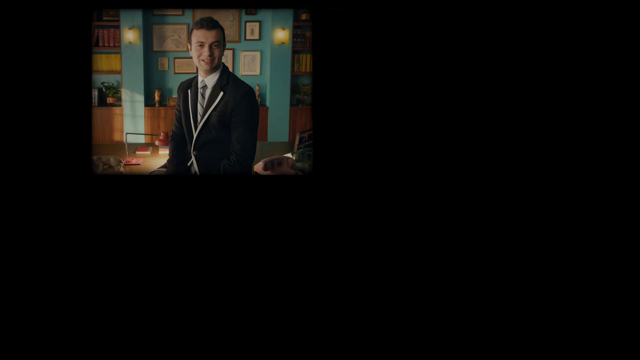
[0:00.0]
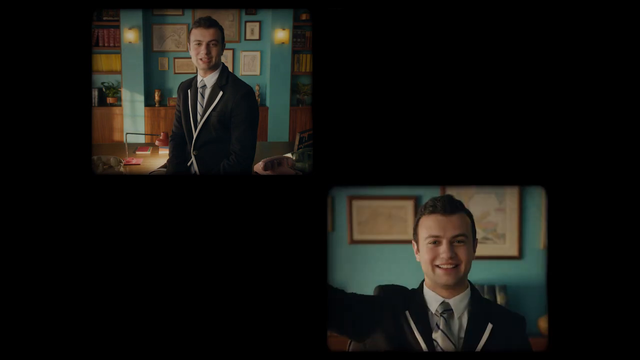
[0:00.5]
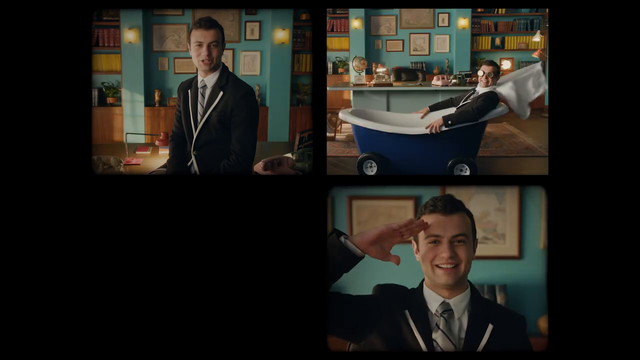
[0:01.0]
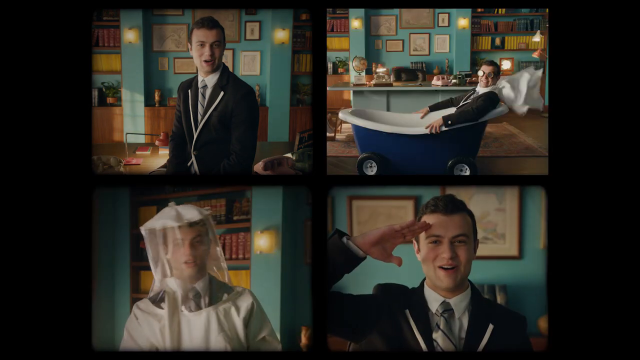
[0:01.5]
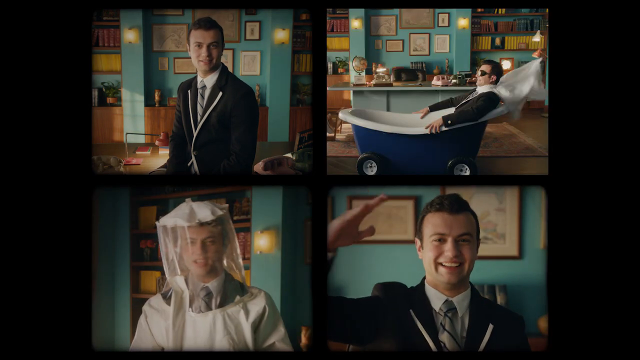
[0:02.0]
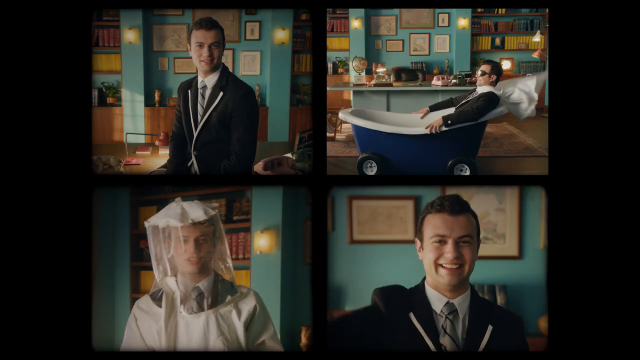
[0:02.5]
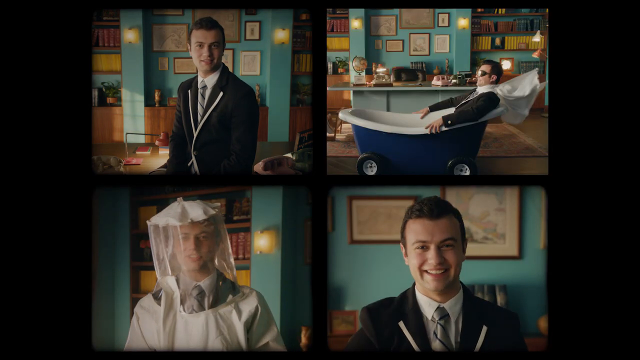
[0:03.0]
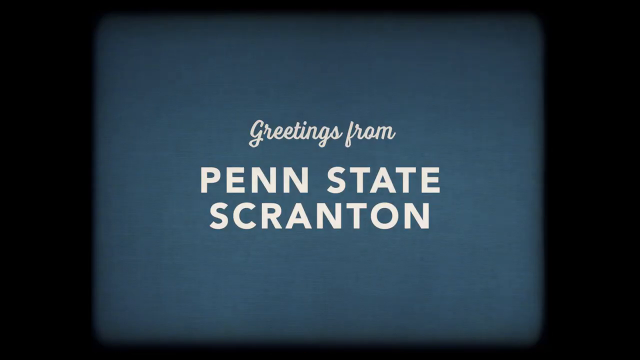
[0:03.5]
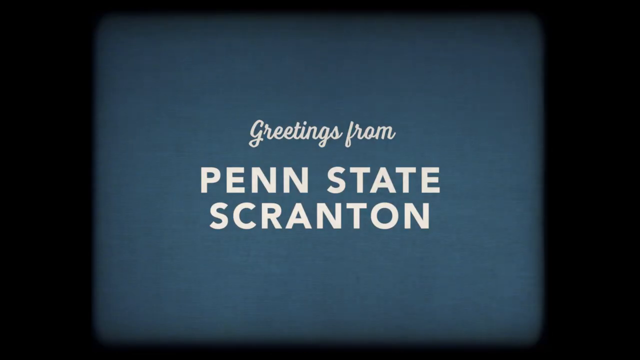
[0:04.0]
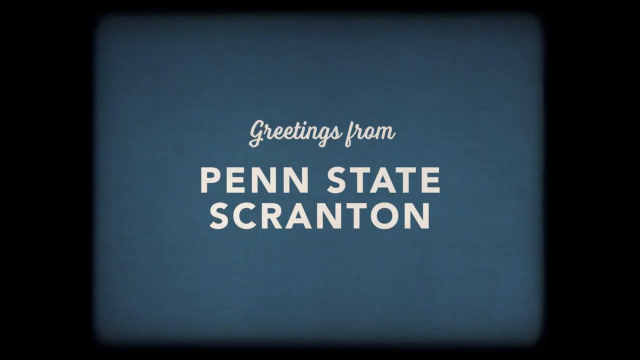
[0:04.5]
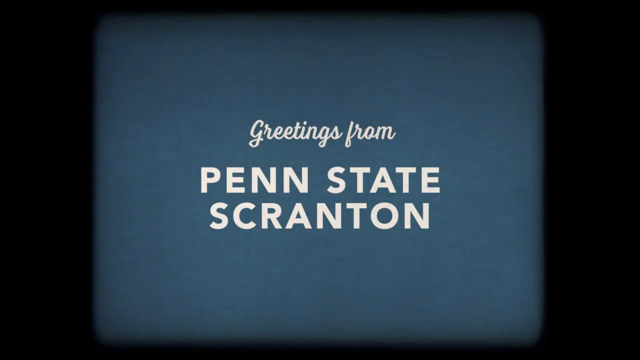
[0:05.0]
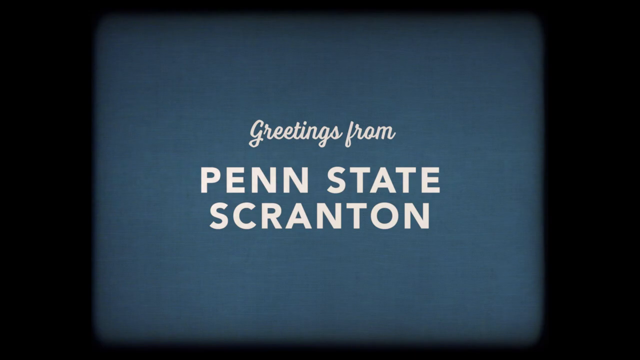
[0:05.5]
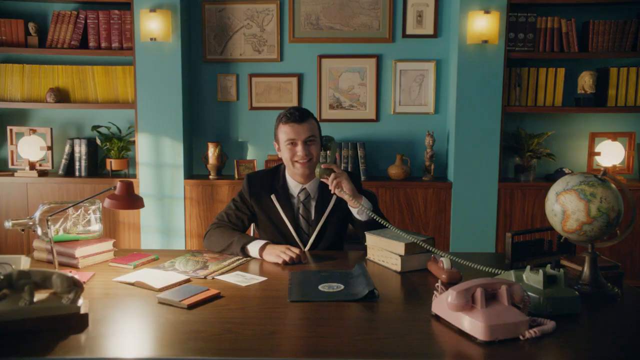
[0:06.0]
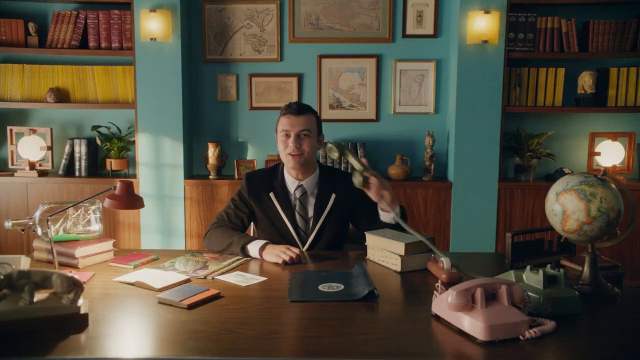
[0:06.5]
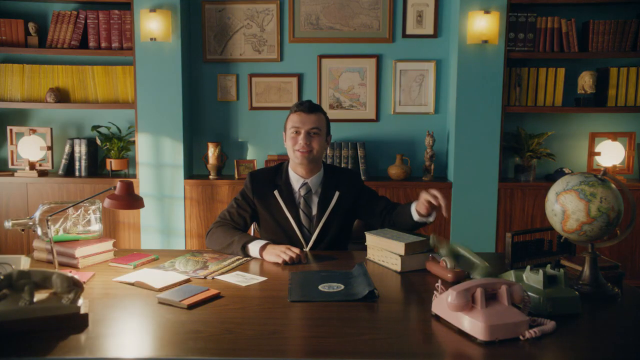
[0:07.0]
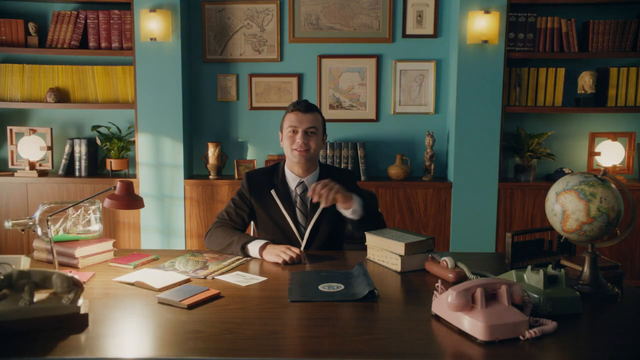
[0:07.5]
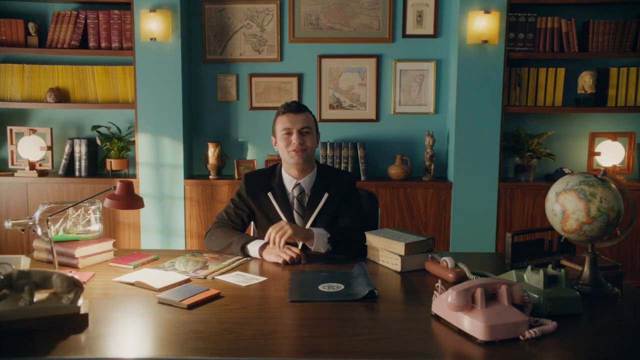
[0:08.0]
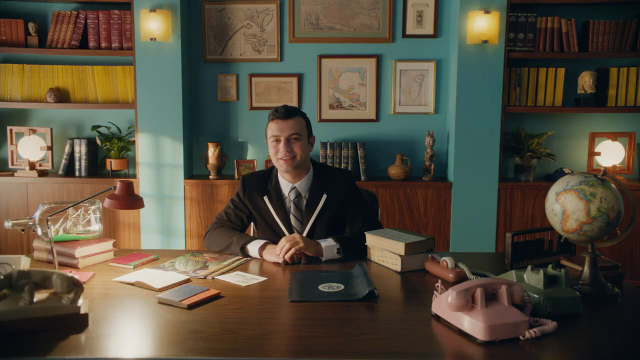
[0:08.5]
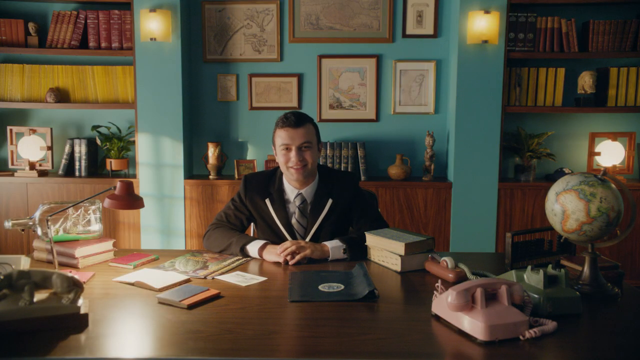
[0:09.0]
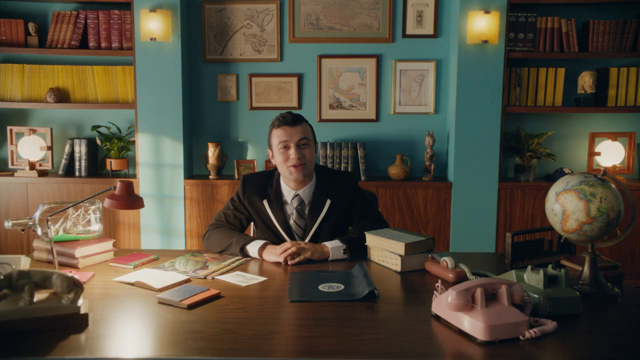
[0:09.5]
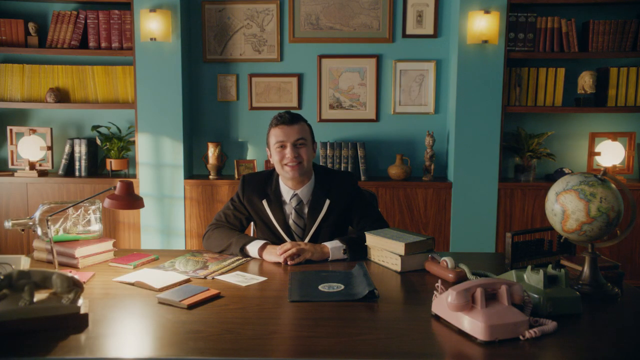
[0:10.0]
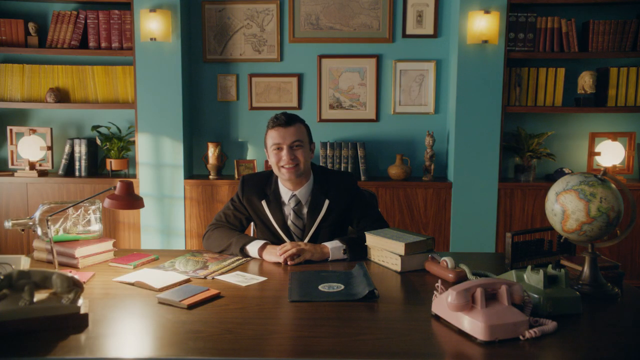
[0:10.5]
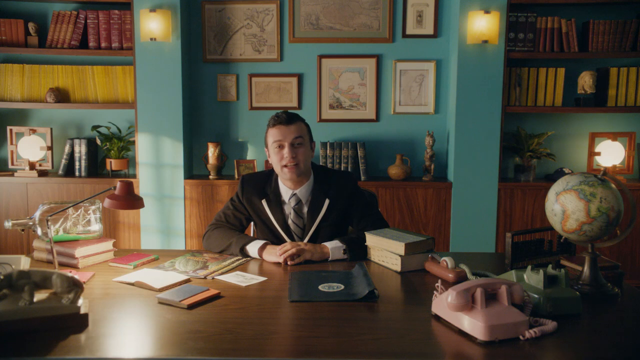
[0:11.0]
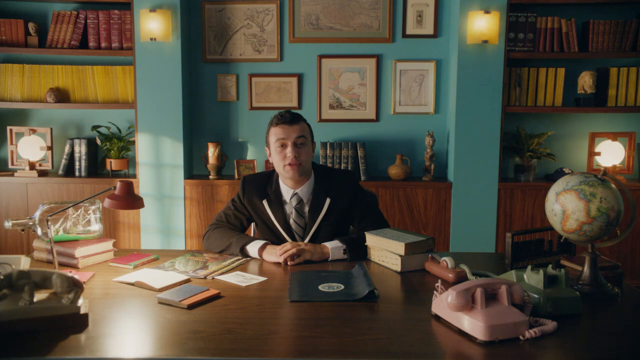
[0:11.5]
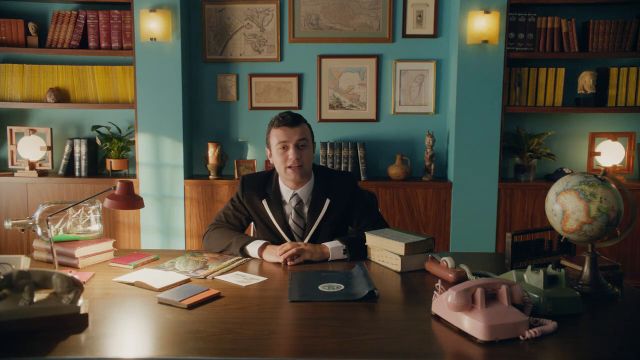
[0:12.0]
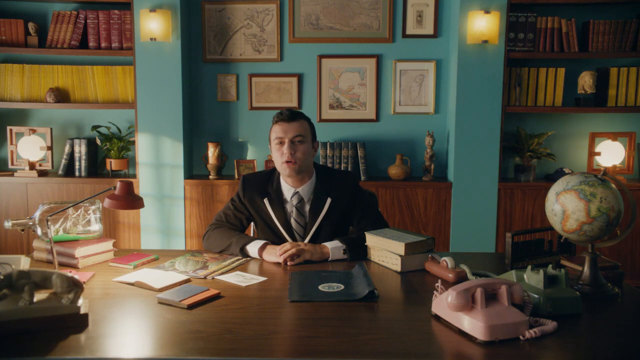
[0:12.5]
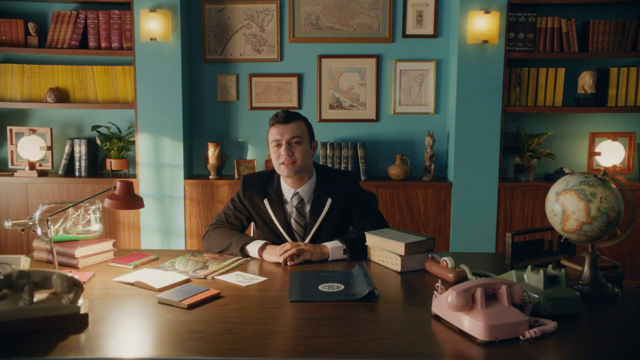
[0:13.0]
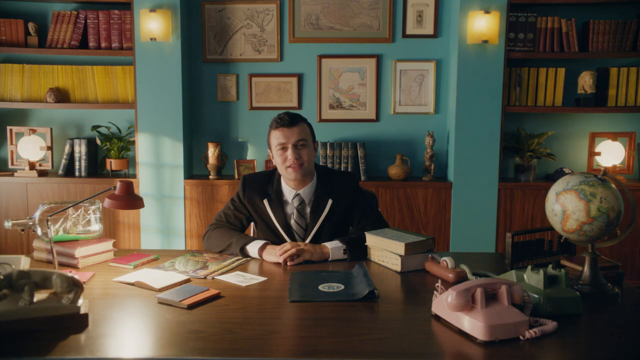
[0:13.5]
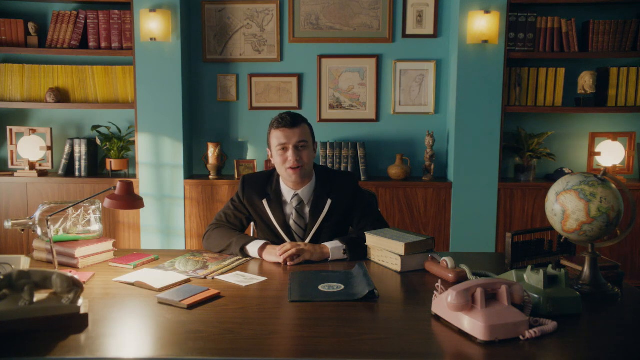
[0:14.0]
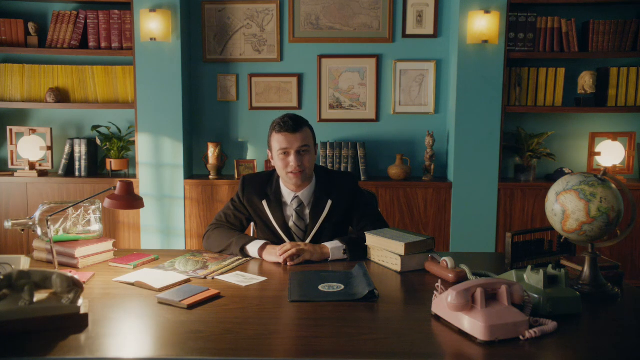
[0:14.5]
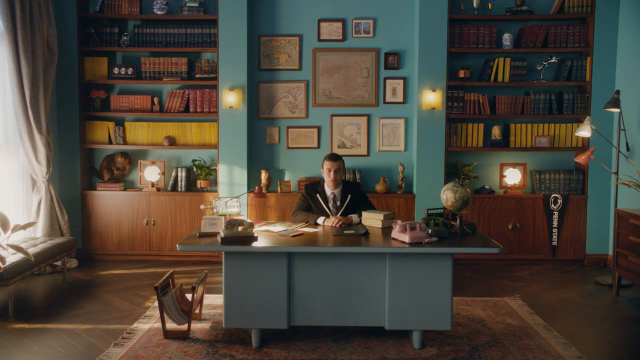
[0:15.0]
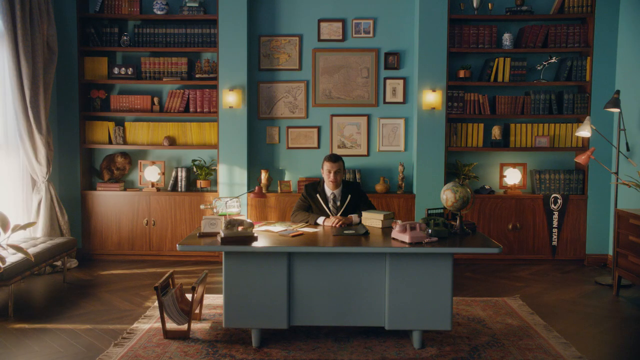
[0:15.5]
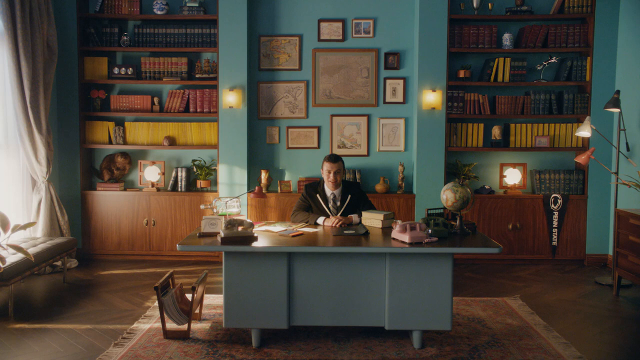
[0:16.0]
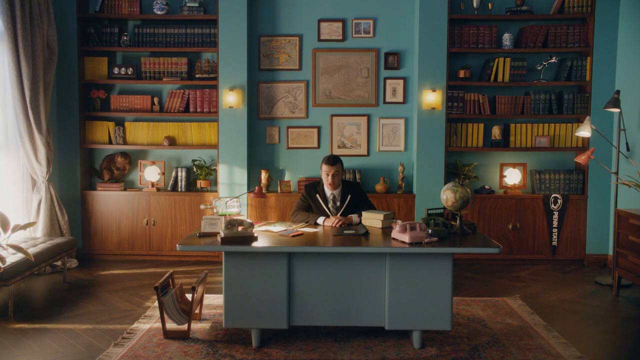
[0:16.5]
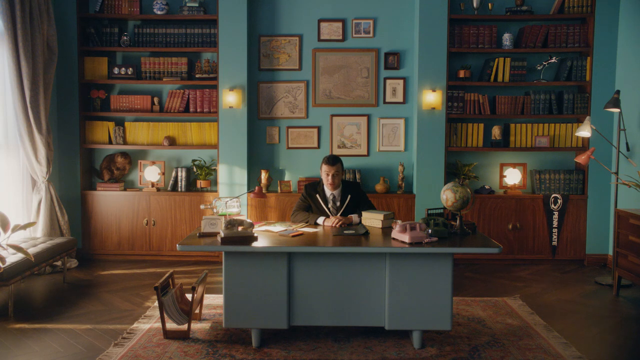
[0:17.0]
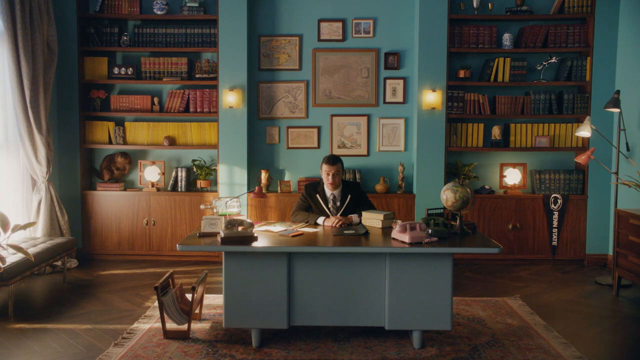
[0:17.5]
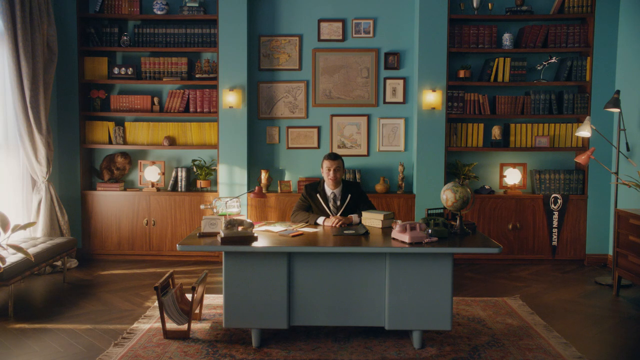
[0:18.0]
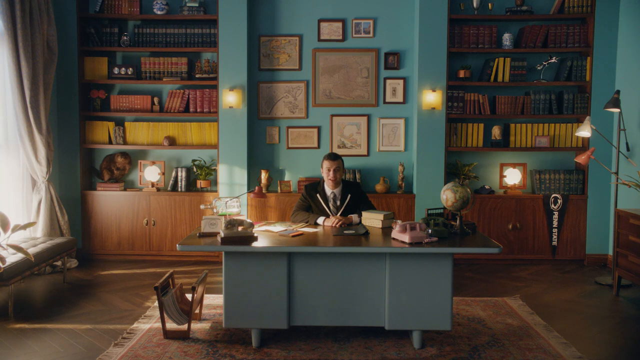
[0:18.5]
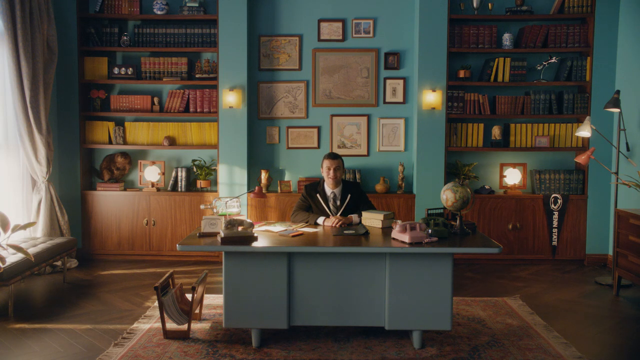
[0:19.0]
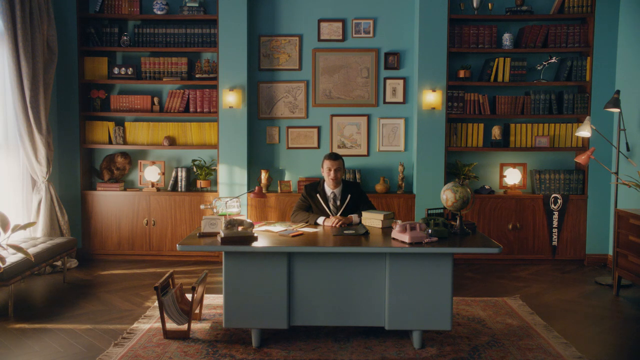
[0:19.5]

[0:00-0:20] A white man with light brown hair comes onto the screen, wearing a suit jacket, a white dress shirt and a light gray tie with black stripes. He faces the camera and talks from inside a smaller frame on the left-hand side of the screen. A few moments later more frames appear, making four frames in total, and the same man is inside all of them. In the frame on the right side, he is in a bathtub with wheels; in the bottom left-hand frame, he wears a beekeeper costume; and in the bottom right-hand frame, he is saluting. The camera then goes to a new screen with white text on a medium blue background that says "Greetings from Penn State Scranton".